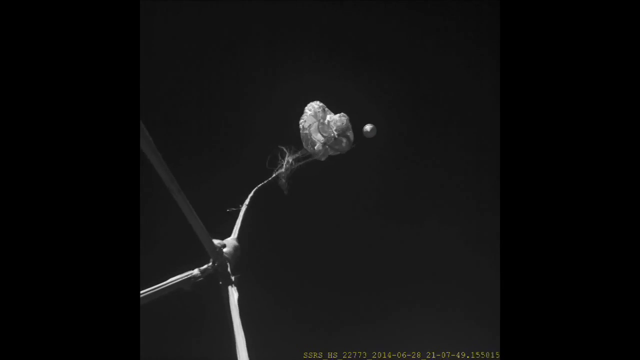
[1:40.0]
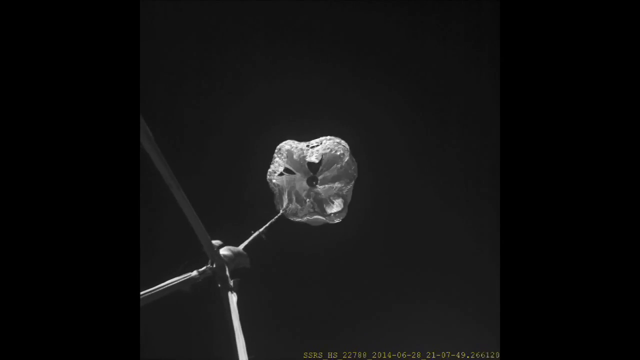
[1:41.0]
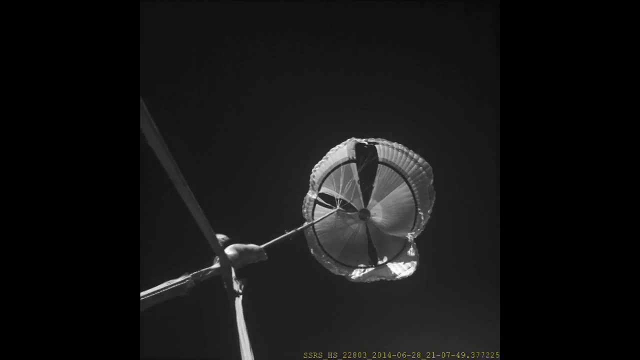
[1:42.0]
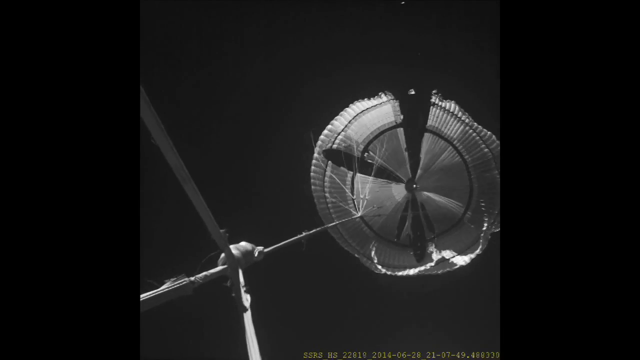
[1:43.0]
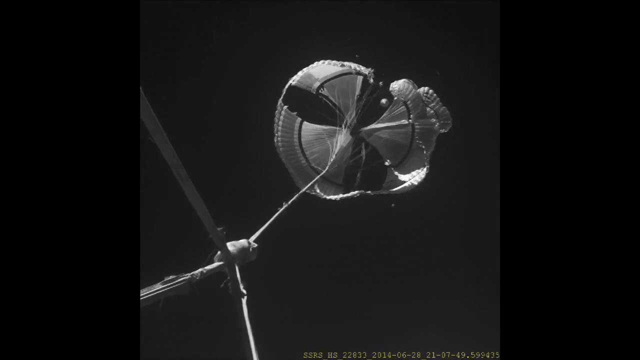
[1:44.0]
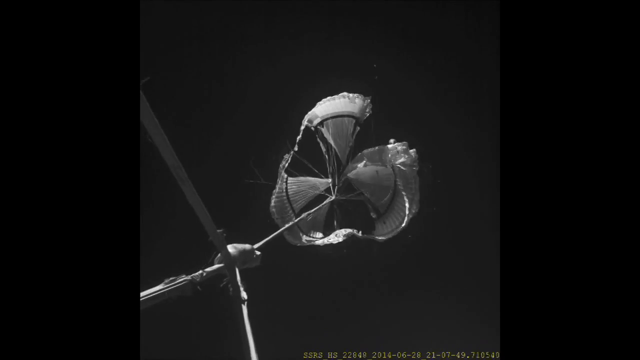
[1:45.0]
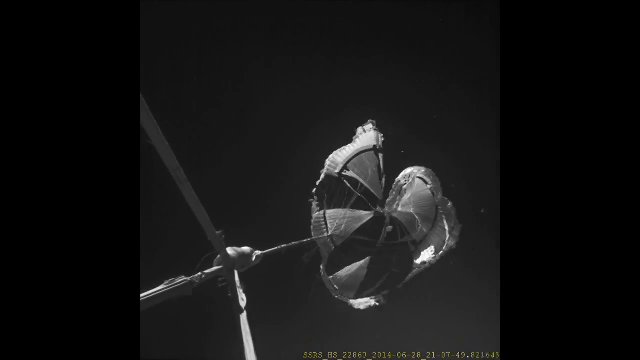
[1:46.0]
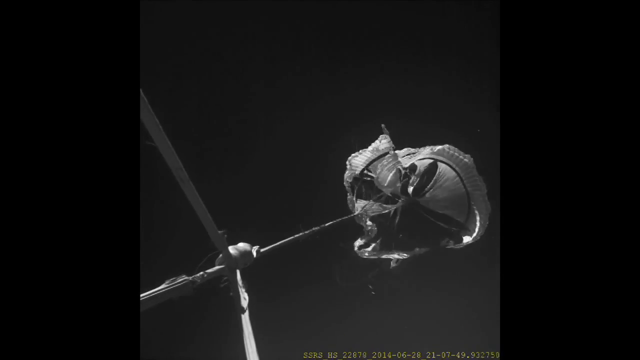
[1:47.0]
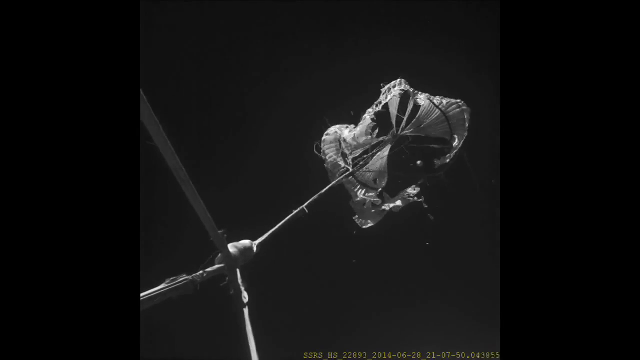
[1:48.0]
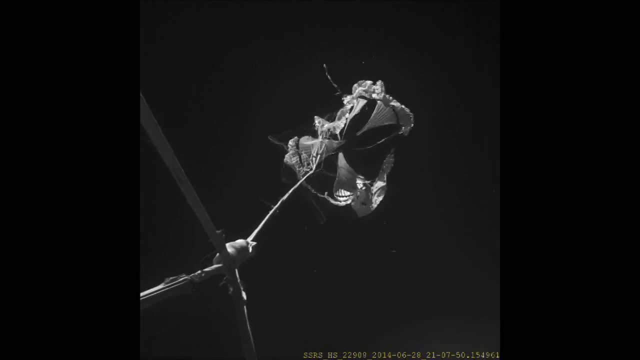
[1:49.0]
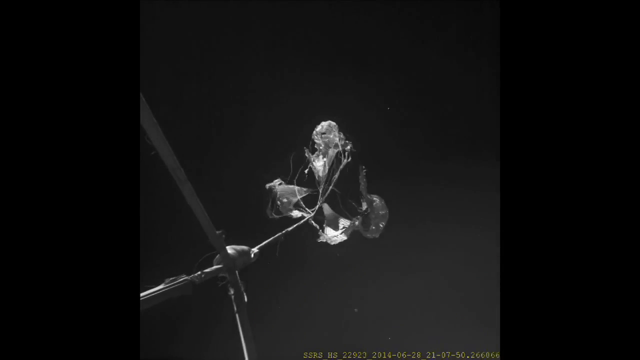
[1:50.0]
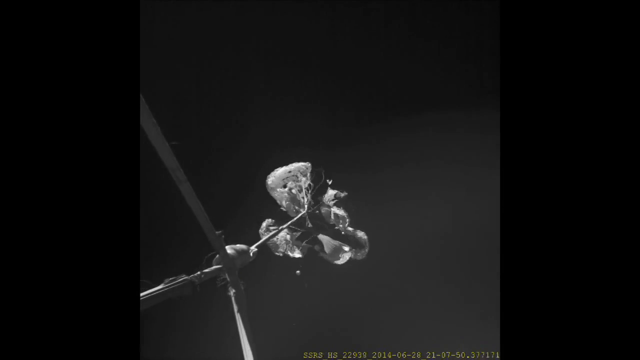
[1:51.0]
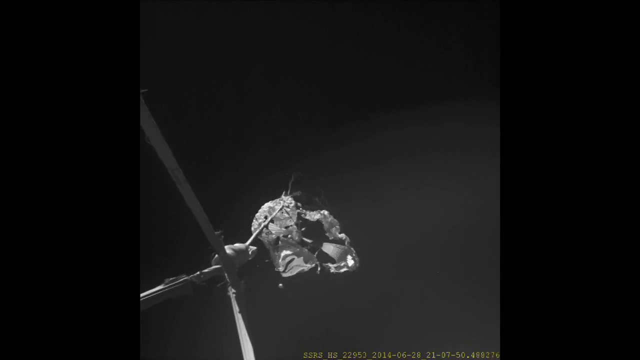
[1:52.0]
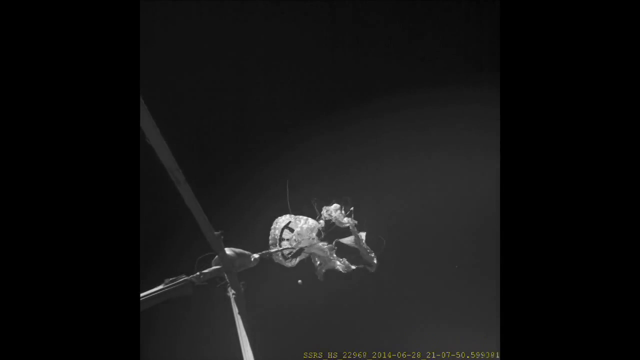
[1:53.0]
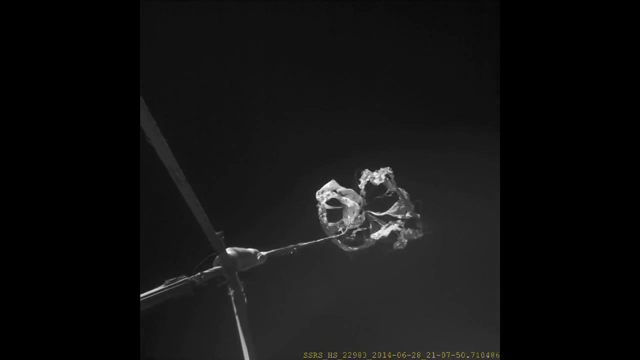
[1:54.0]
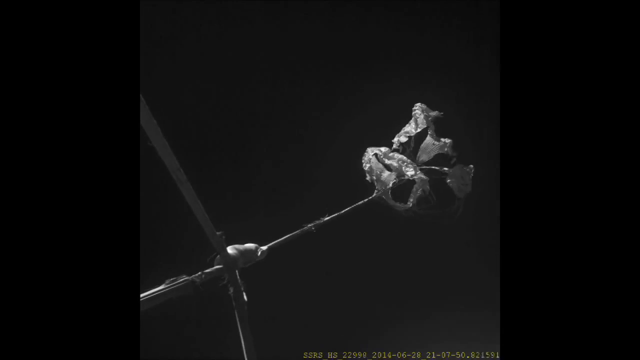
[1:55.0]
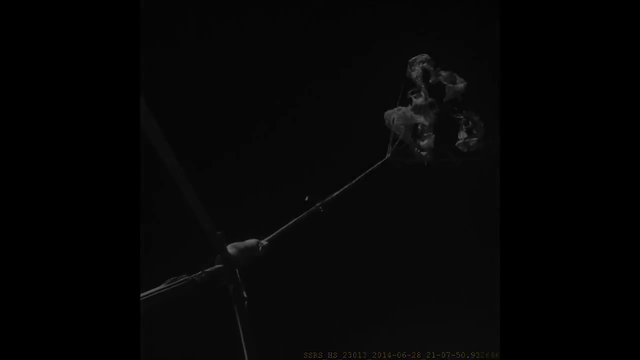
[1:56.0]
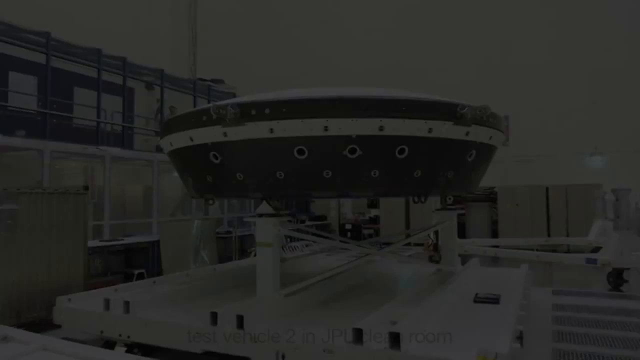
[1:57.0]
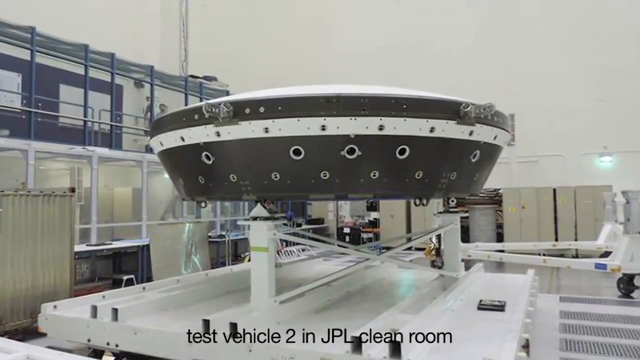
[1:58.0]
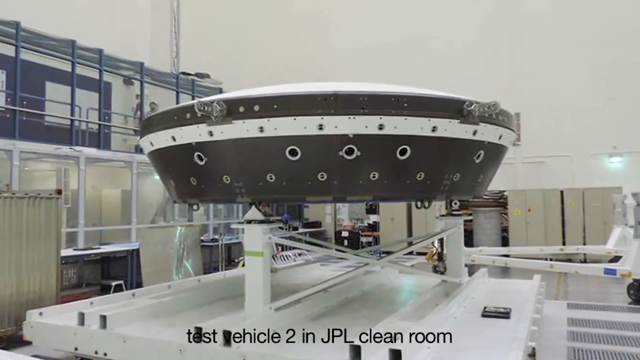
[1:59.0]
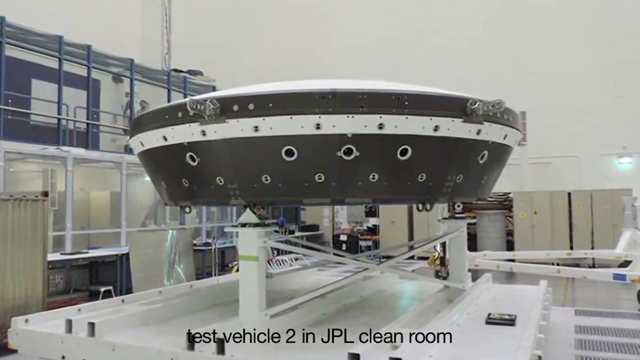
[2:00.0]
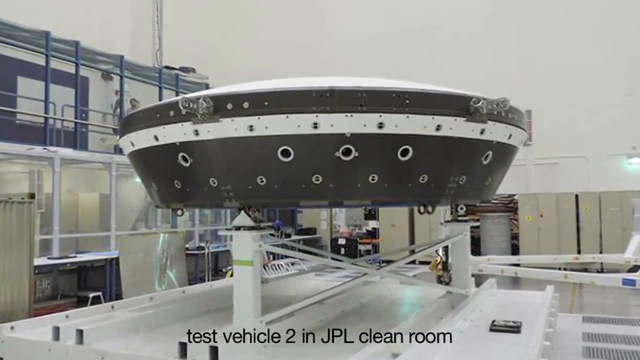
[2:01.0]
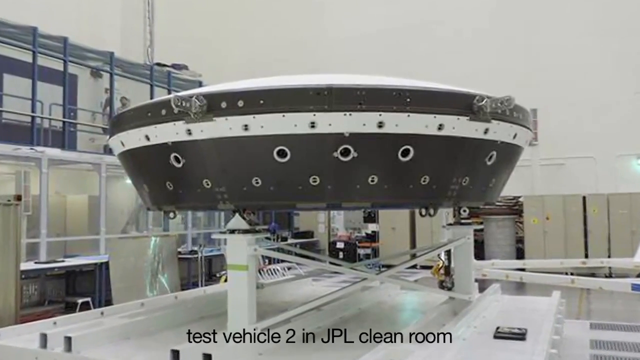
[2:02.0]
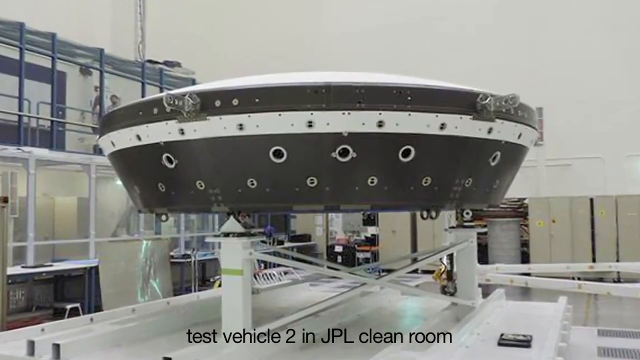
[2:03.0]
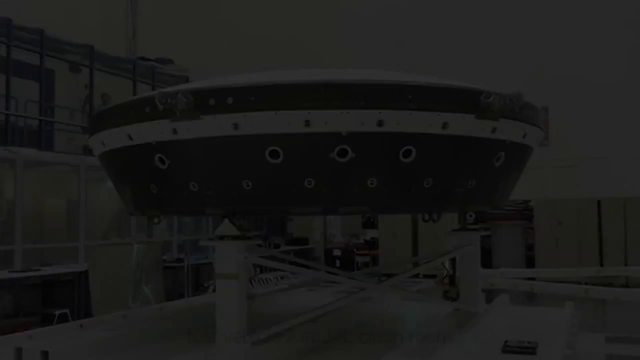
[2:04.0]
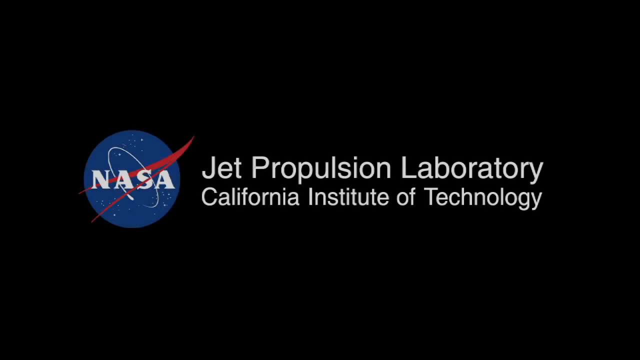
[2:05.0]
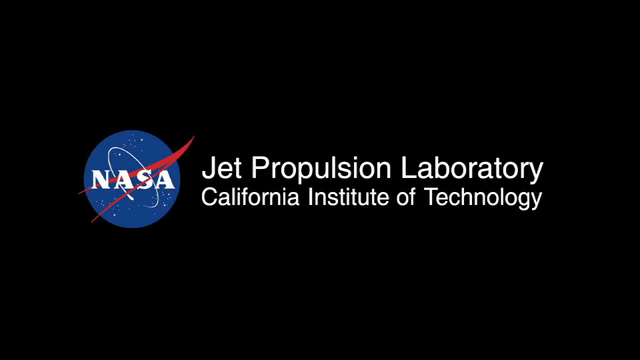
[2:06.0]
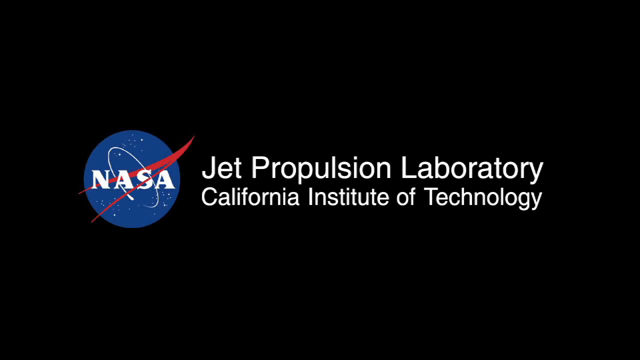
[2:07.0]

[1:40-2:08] The parachute fully deploys and appears to start breaking up into pieces, ripping and tearing, slowly becoming a massive floating fabric in the black-and-white footage. The scene switches back to Earth, inside a factory or laboratory where a new space device is being built; text at the bottom reads "test vehicle 2 in JPL clean room." The walls and everything in the room are very white, and a very large, kind of disc-shaped device is held up by beams. The screen fades to black with a NASA logo and the words "jet propulsion laboratory California Institute of Technology." The NASA logo is a blue circle with a red line through it and a circle like a comet going around the word NASA.